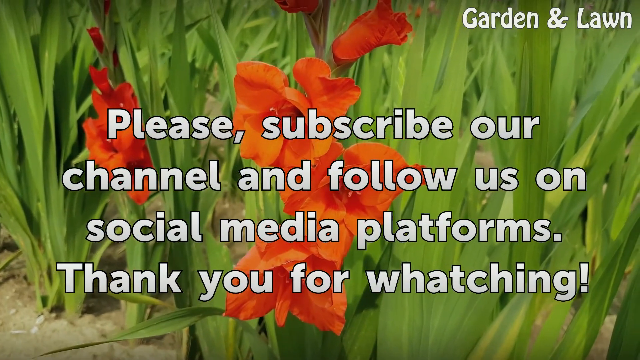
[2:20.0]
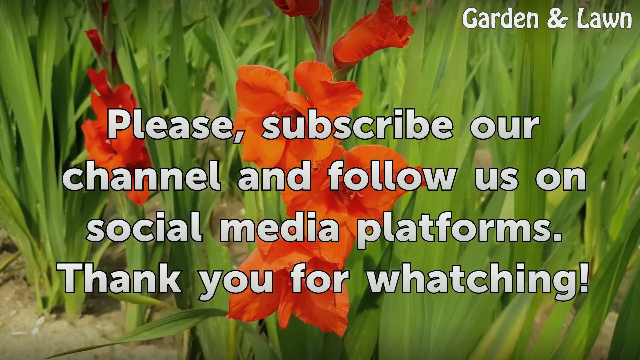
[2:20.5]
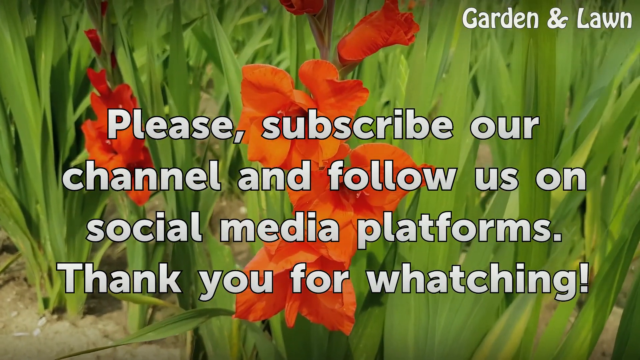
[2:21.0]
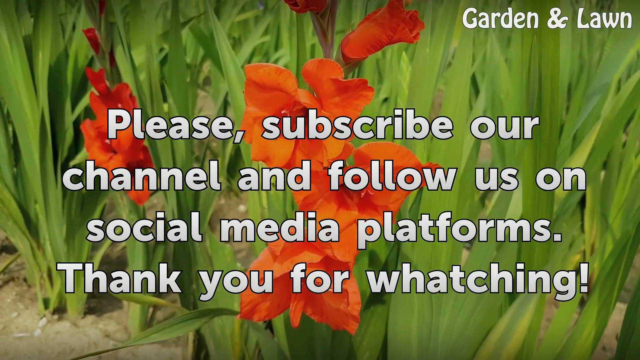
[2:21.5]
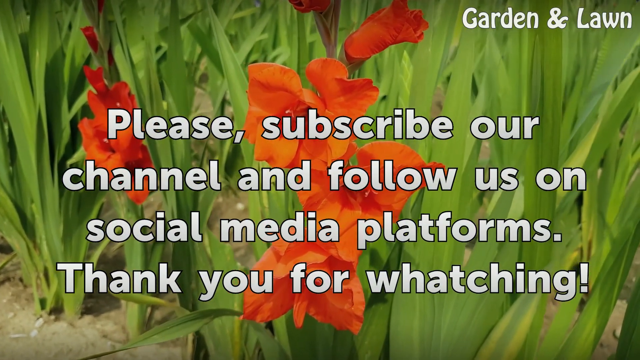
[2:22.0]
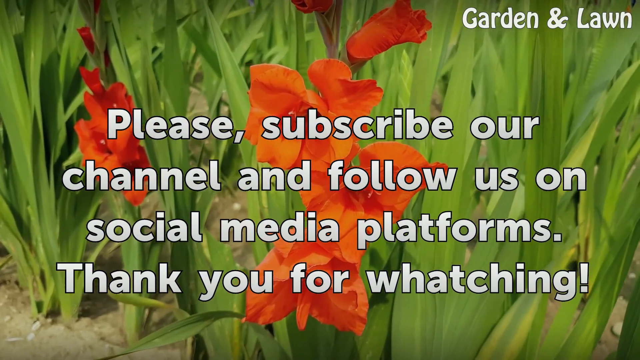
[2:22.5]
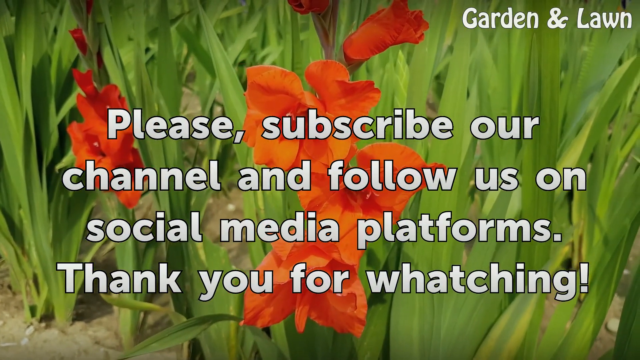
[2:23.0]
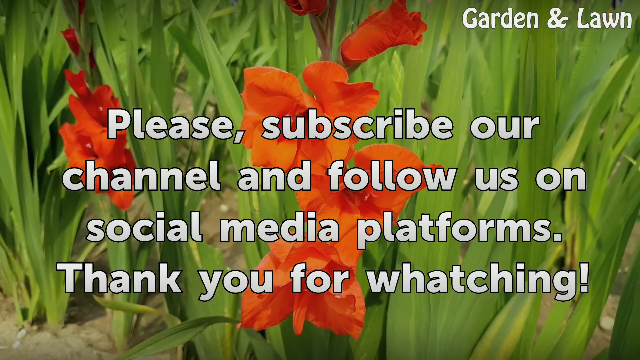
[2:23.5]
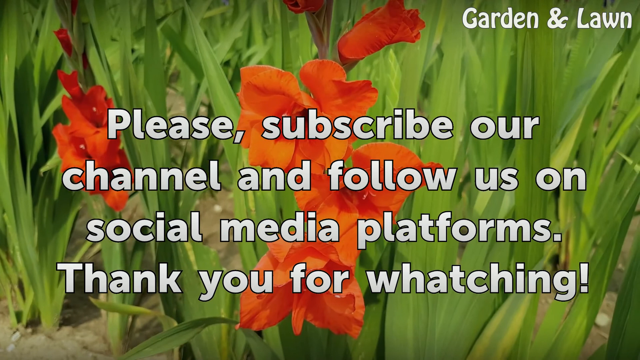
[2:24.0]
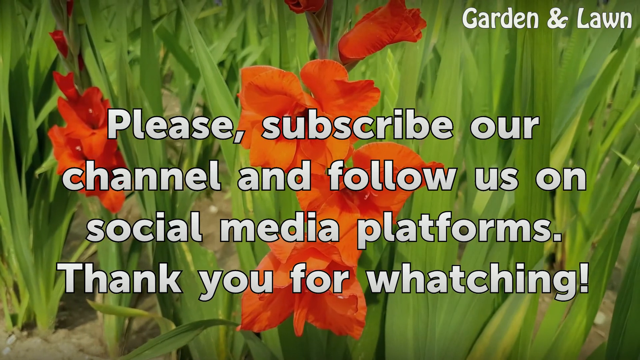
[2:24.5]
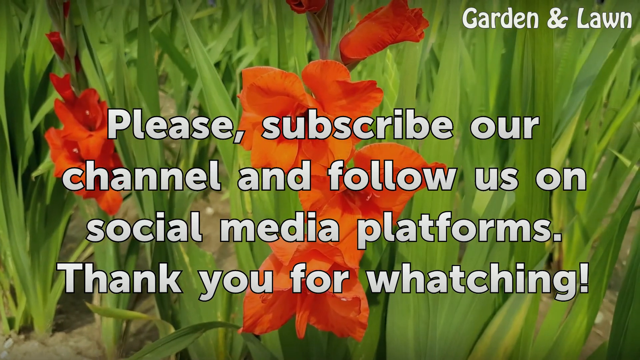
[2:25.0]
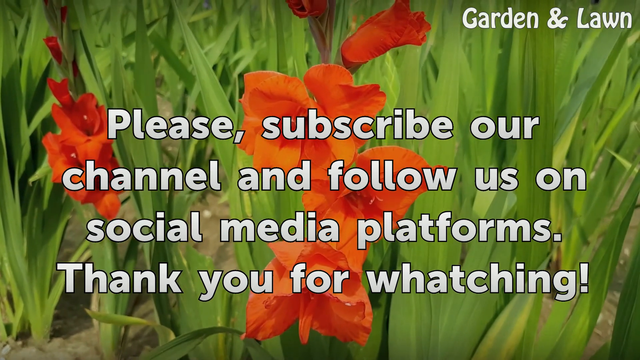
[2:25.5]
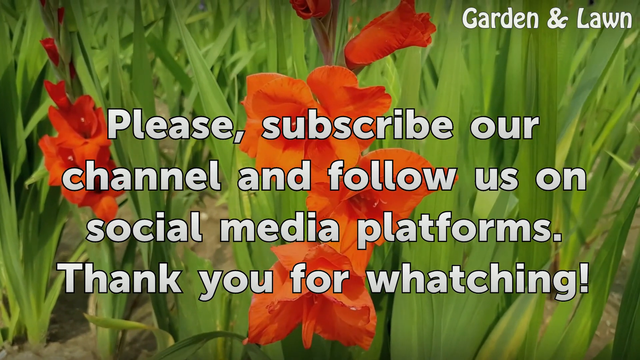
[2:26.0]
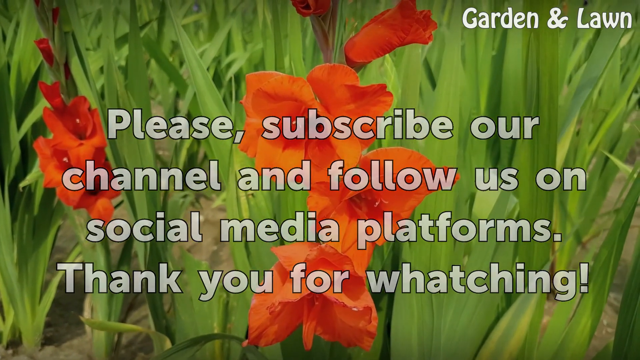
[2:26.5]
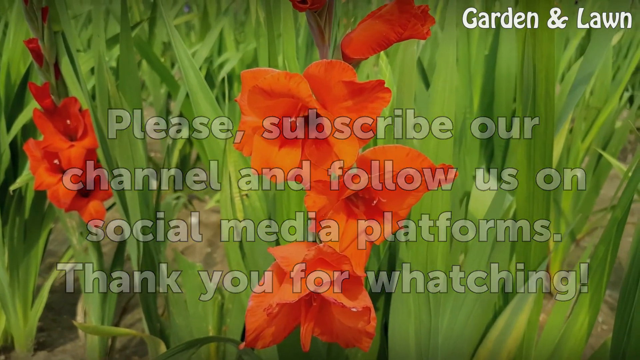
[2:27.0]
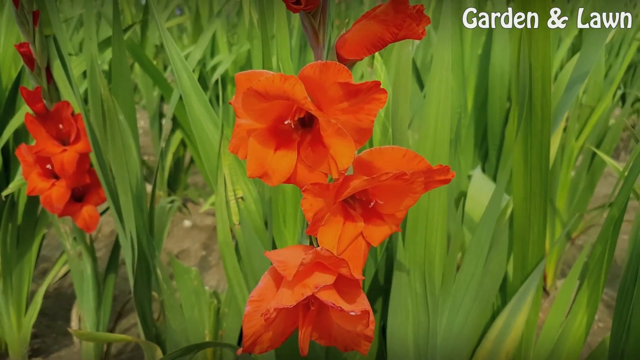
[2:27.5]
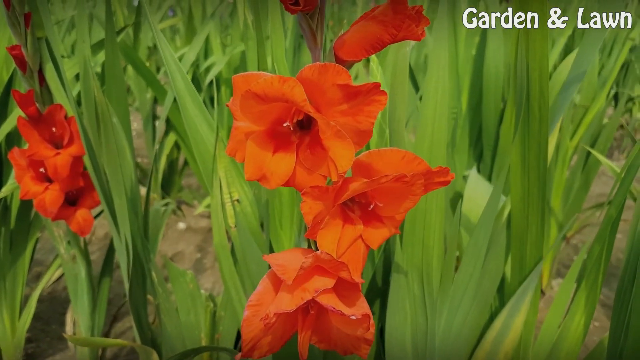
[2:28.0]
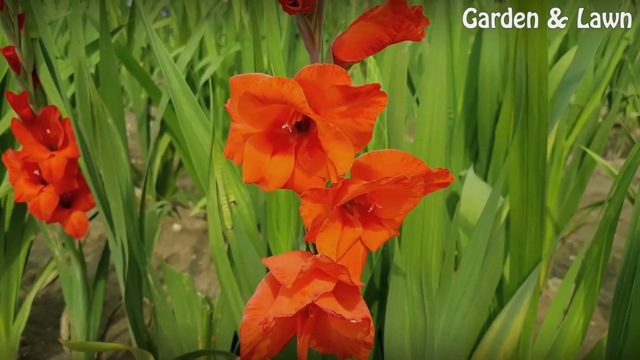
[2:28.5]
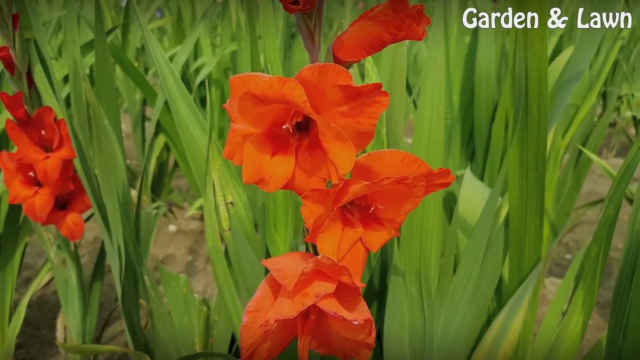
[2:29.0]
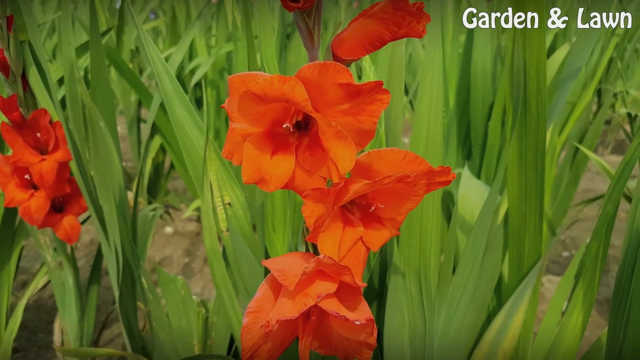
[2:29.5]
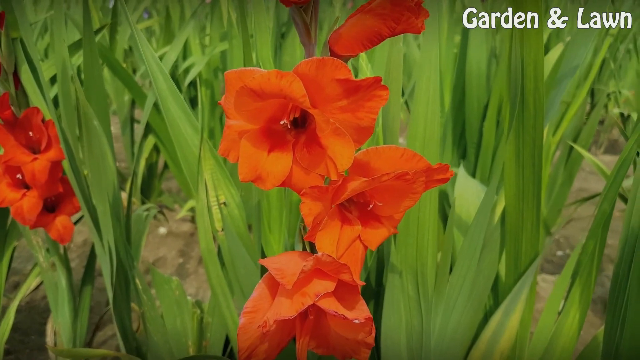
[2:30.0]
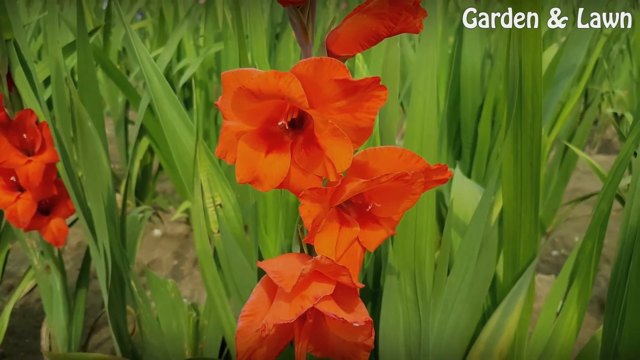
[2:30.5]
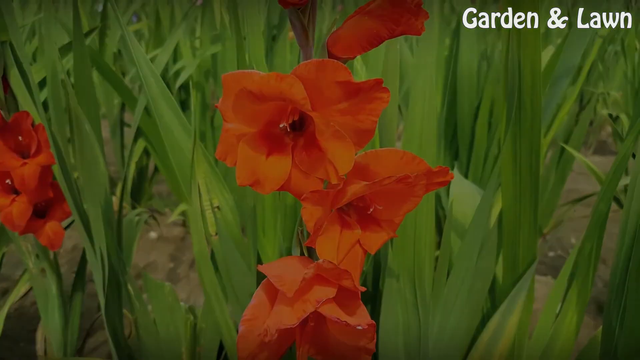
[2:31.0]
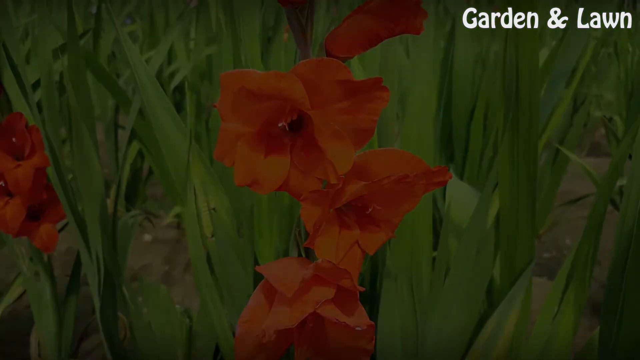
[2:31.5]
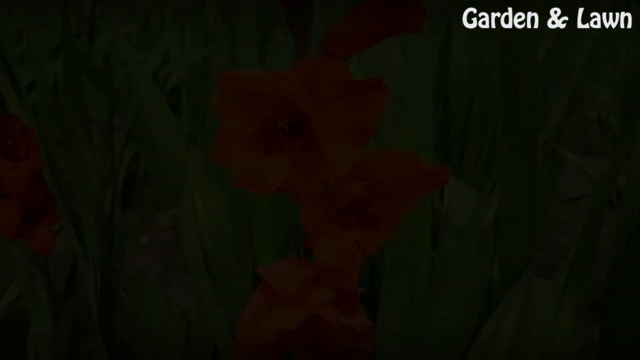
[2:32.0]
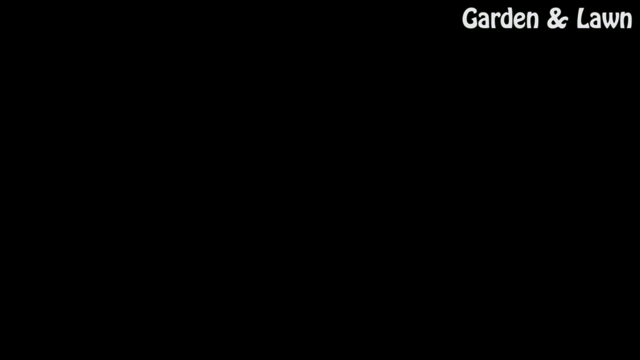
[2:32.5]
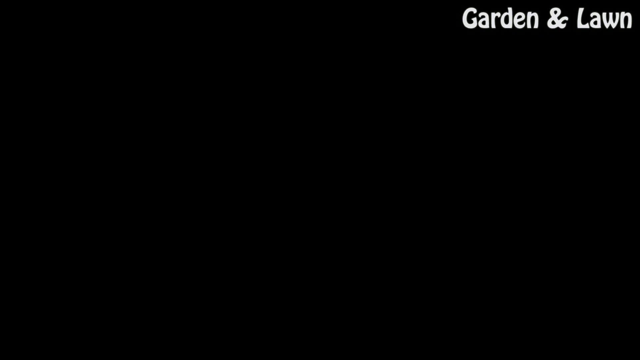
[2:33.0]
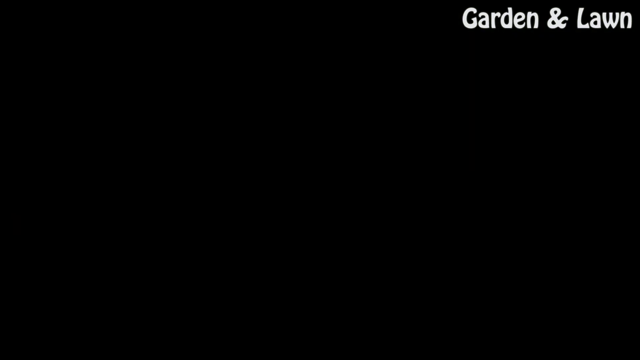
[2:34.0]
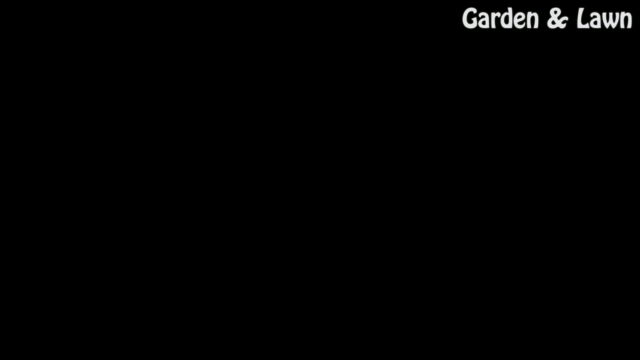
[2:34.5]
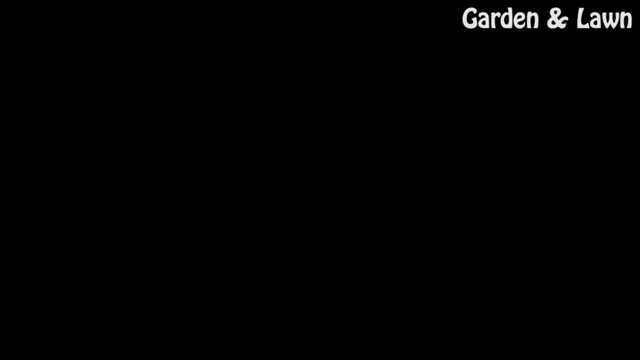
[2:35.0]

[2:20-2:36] The text disappears, leaving the flowers in the background. The camera pans in to the left, showing a group of flowers on the right, with green leaves and some dirt in the background. The picture then fades to black.